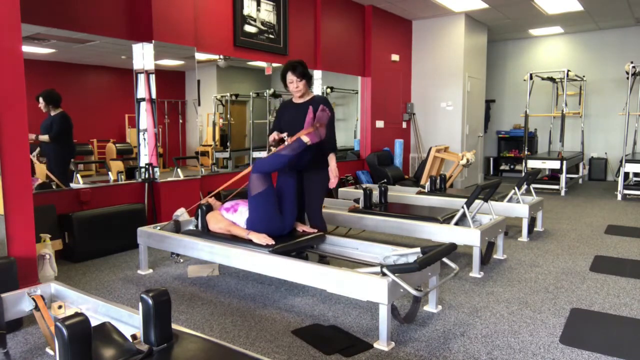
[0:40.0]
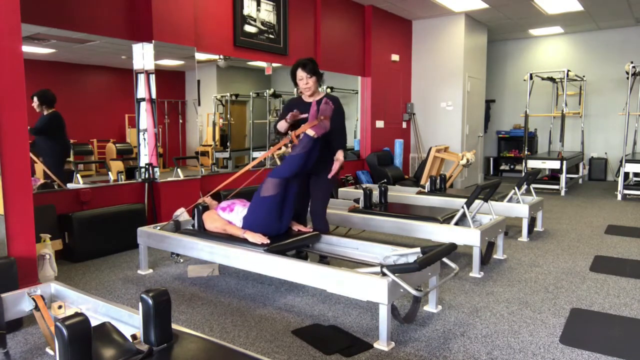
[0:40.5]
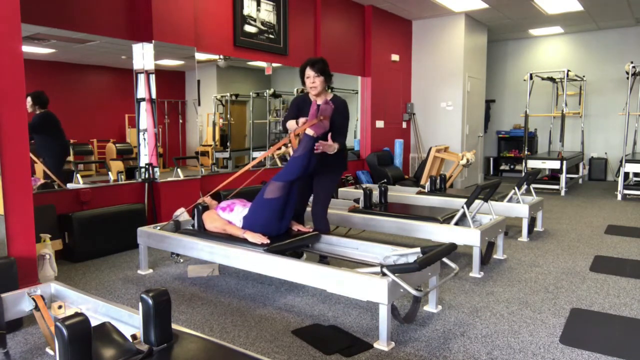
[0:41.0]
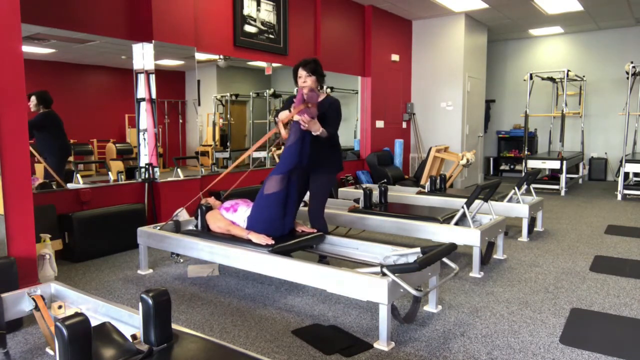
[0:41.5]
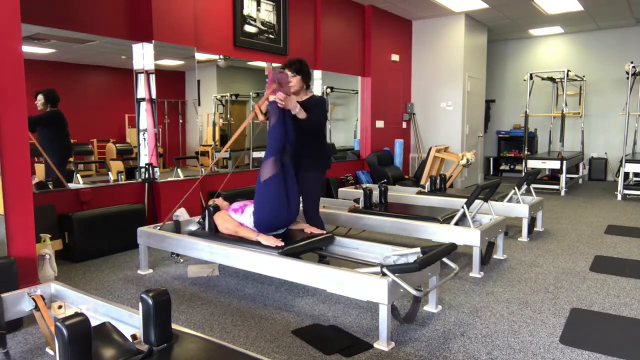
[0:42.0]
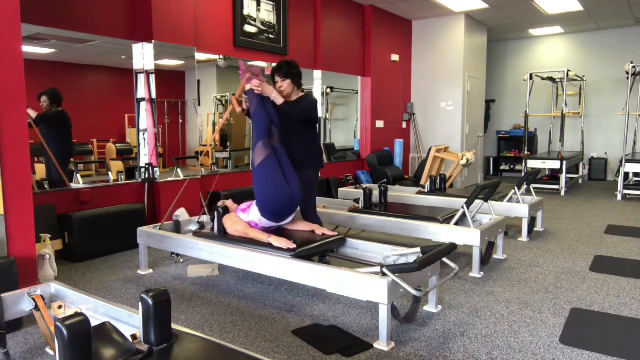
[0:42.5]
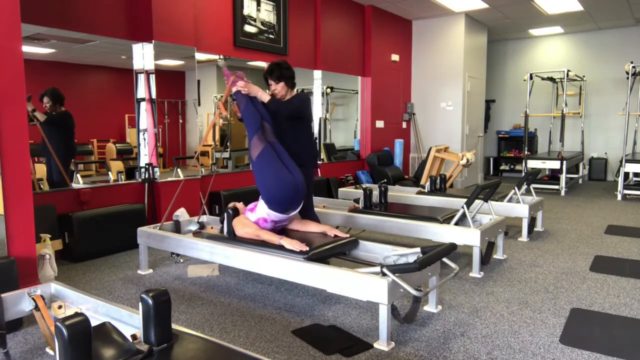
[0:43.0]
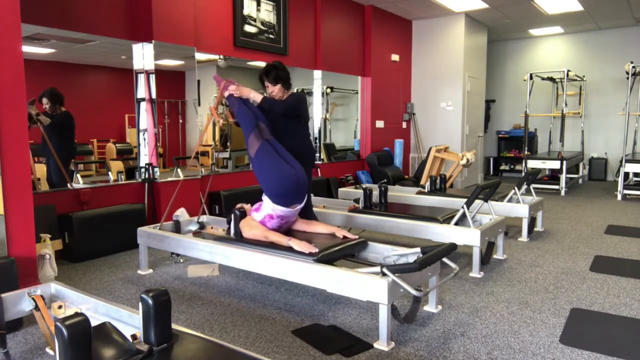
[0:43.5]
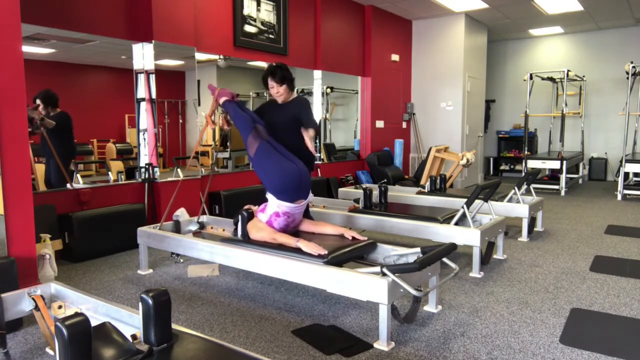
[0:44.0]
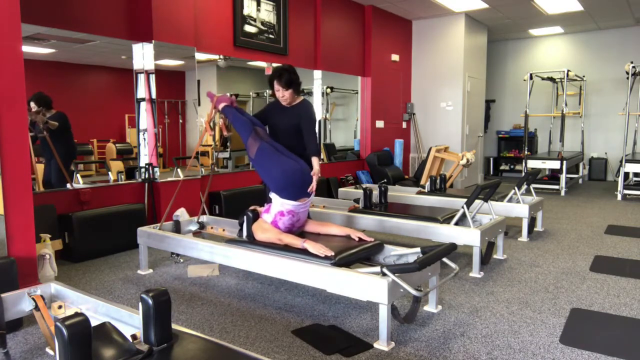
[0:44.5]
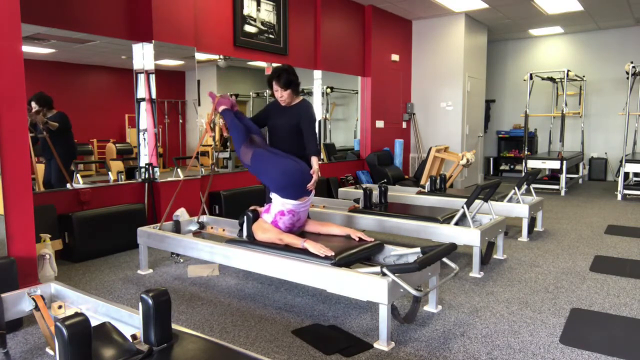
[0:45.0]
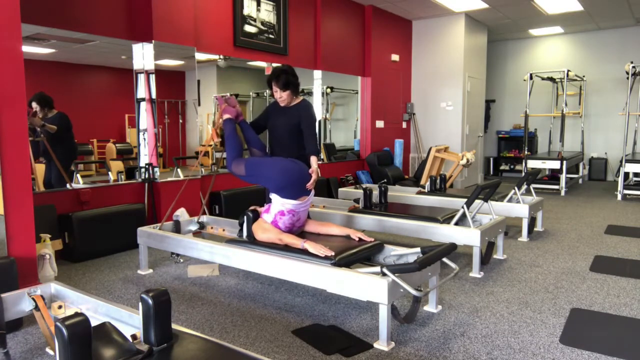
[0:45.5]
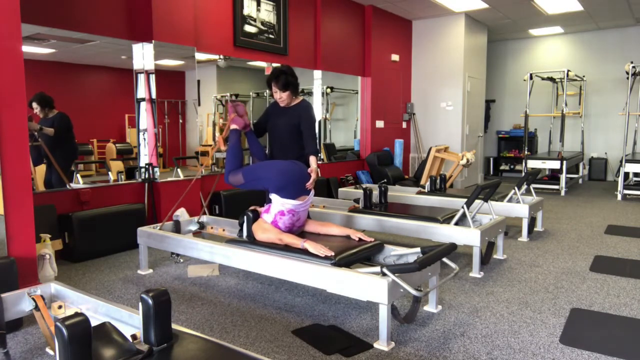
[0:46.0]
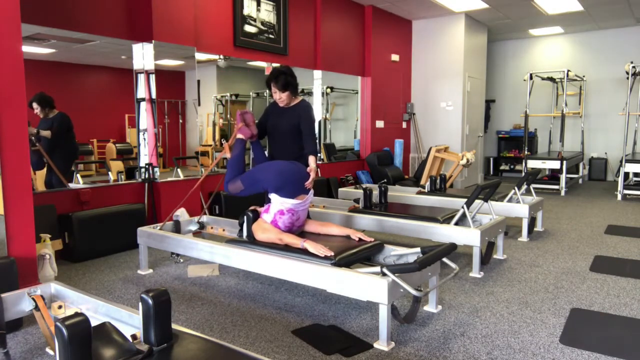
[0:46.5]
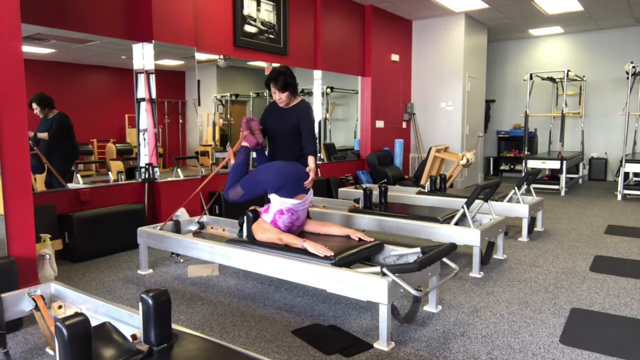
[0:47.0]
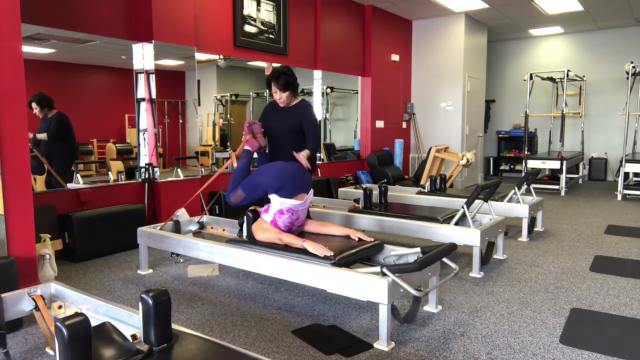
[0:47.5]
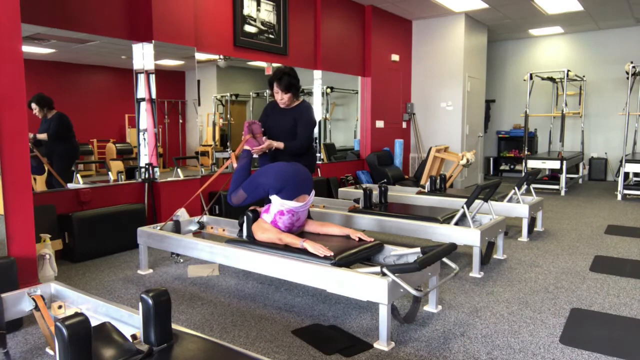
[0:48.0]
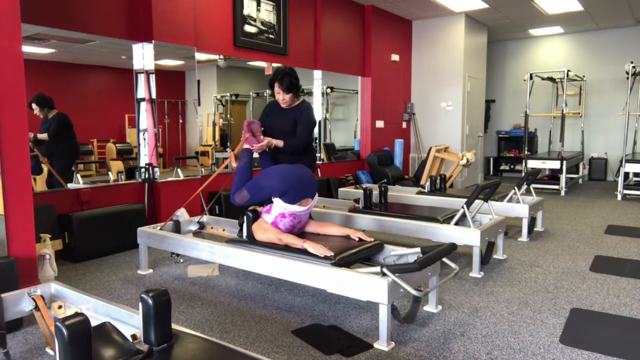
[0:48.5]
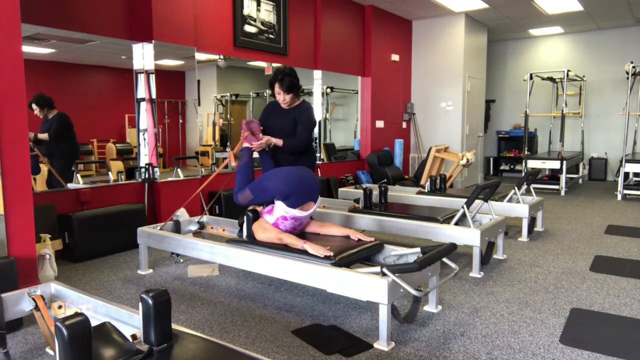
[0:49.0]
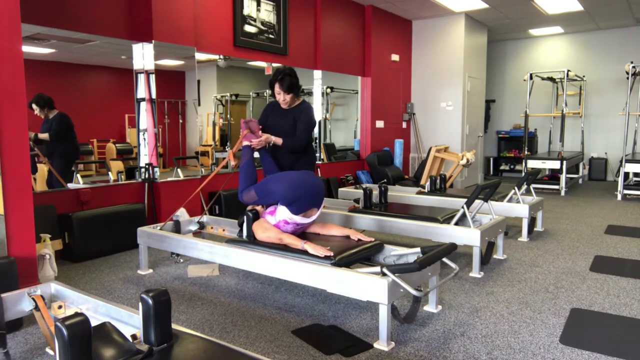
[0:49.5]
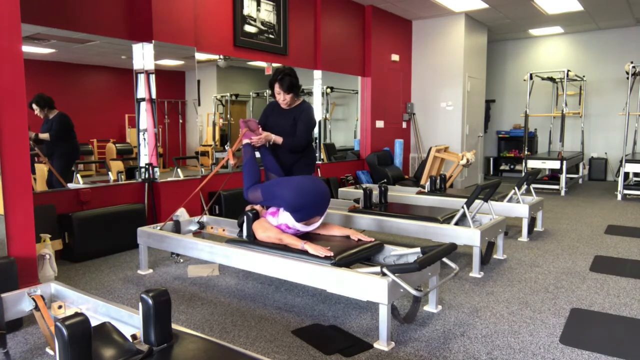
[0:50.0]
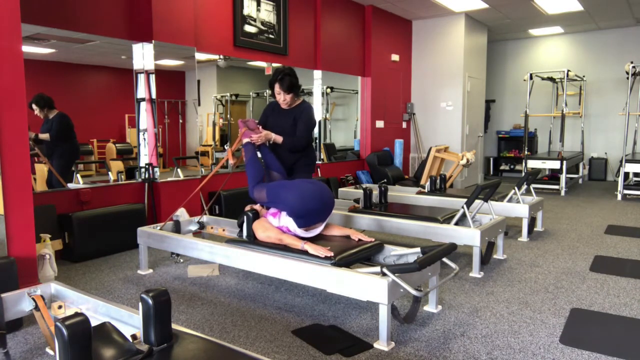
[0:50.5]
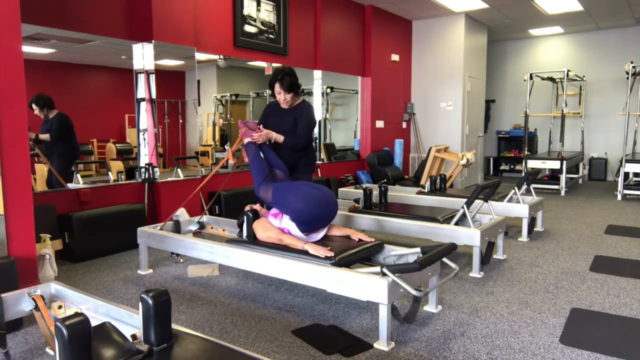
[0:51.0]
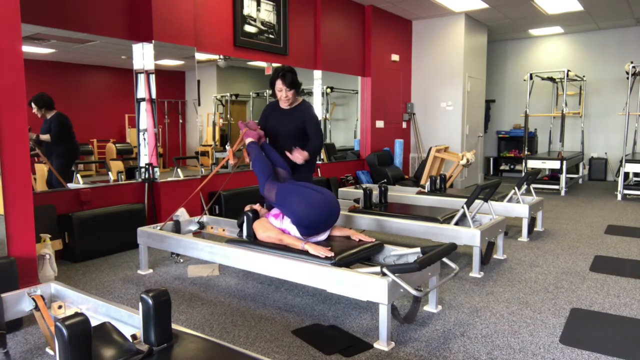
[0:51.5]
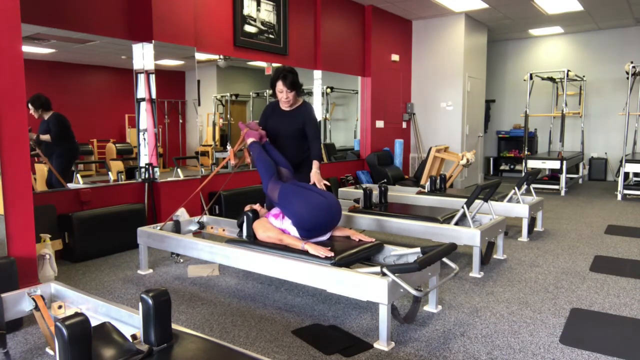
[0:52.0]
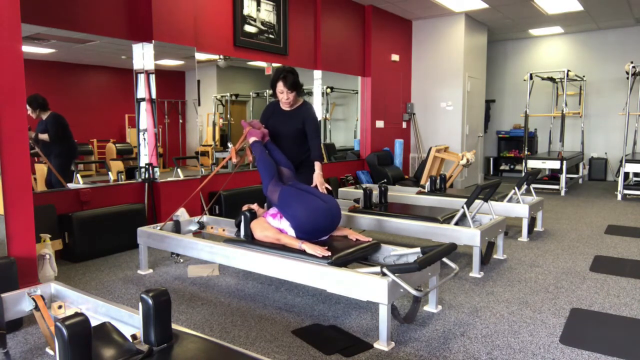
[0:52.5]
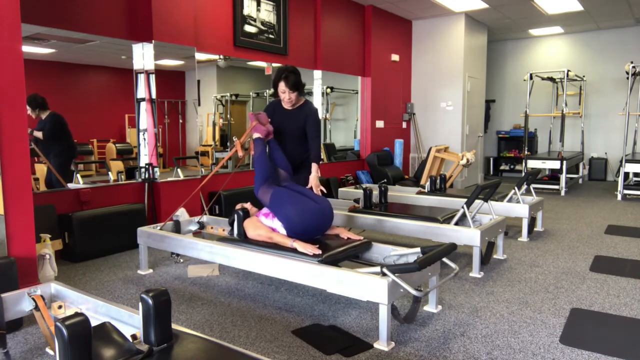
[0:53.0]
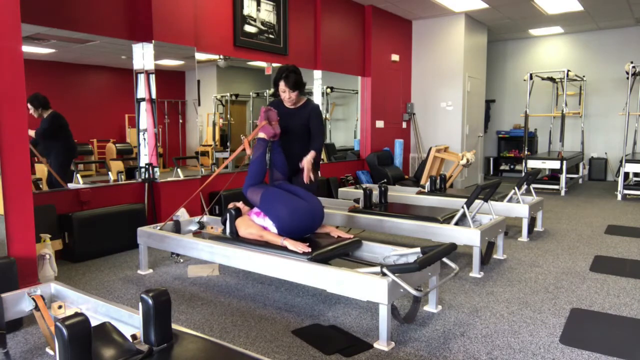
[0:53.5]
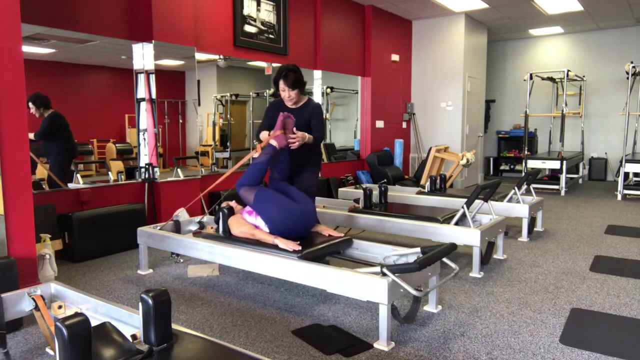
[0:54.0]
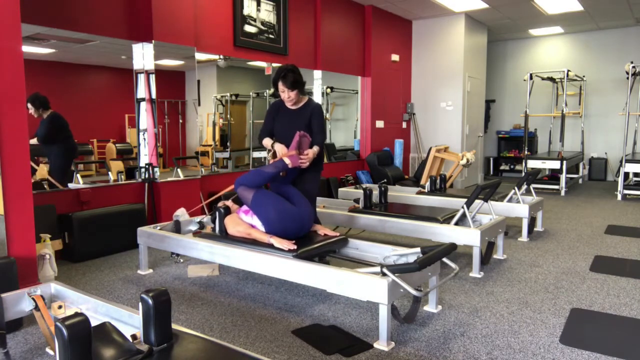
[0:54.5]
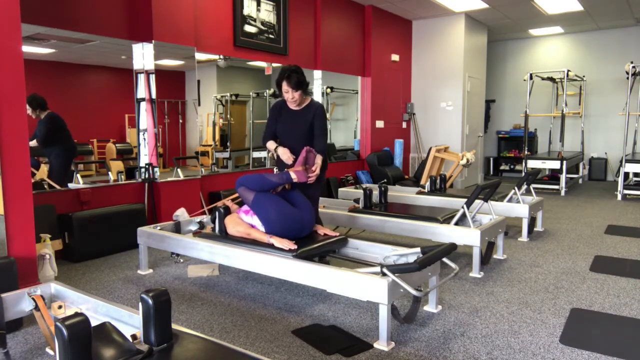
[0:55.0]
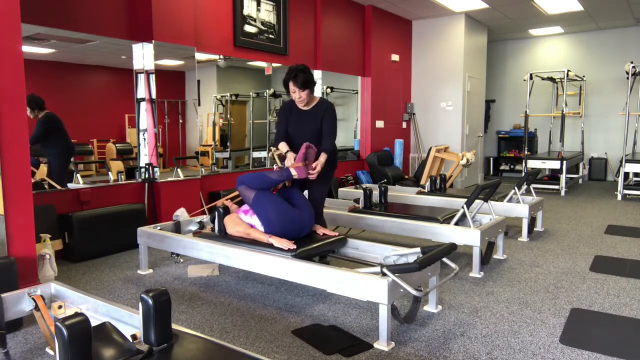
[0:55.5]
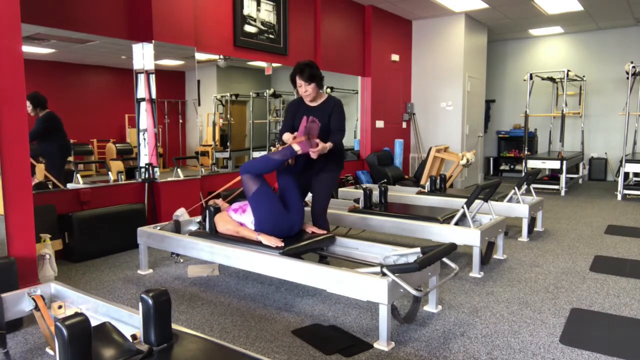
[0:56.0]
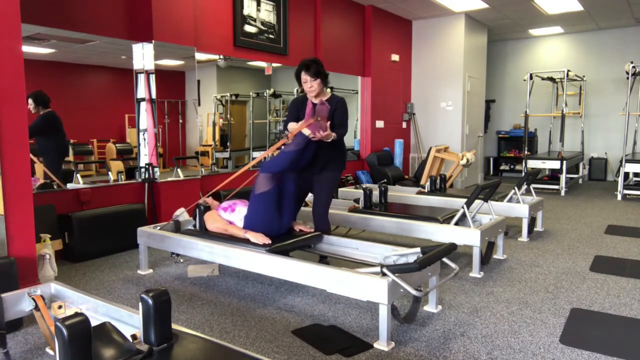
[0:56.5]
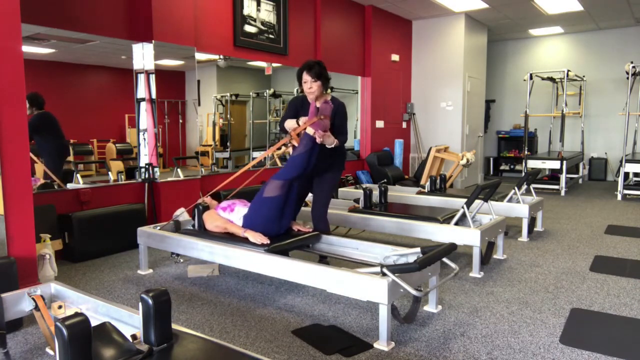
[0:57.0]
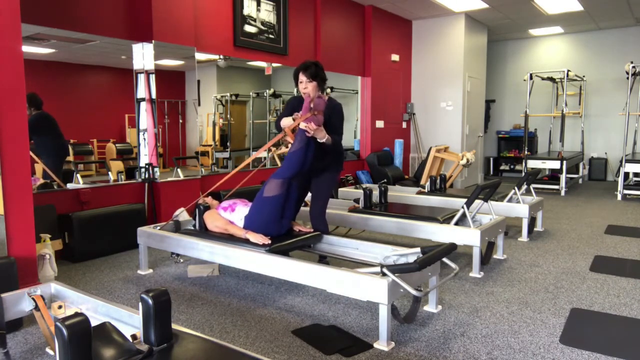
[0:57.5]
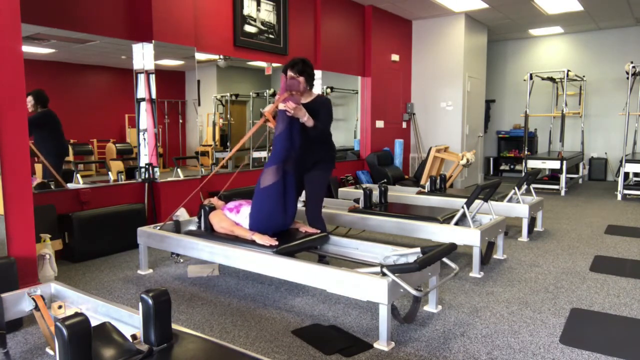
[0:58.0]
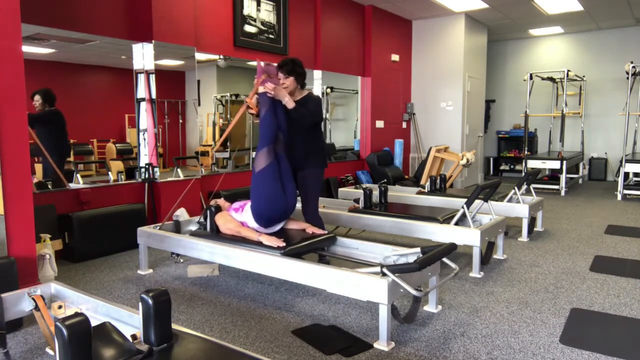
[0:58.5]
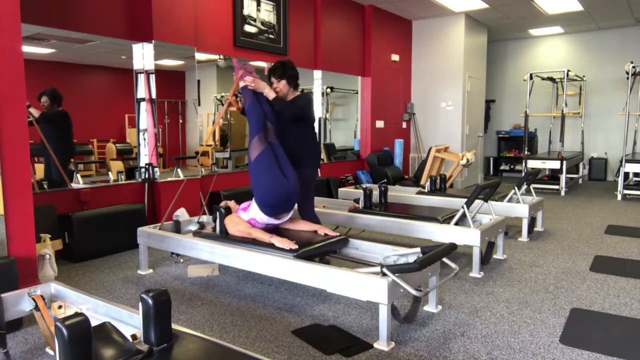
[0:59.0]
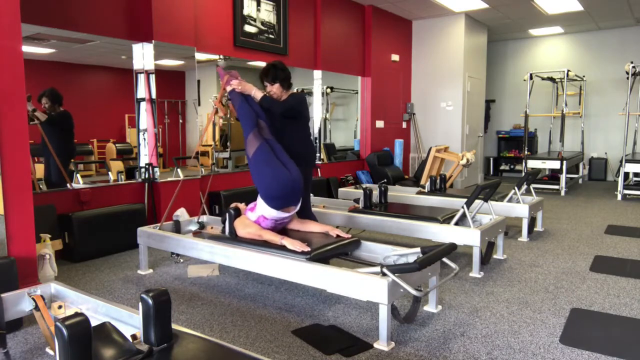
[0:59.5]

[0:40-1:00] In a Pilates studio with reformers lined up against a red mirrored wall, a woman lies on a Pilates reformer in the foreground, her legs extended and her feet in loops at the ends of the reformer's bands. An instructor standing behind her helps hold her in position. The instructor grabs the woman's feet and pushes them up and gently back so that the woman's lower back and buttocks lift off the carriage and her legs are stretched over her head. She then bends her knees, brings them toward her face, and lowers her lower back and buttocks back onto the carriage as the instructor guides her feet down. She stretches her legs back out, performs the move again, and begins to move her legs back over her head.